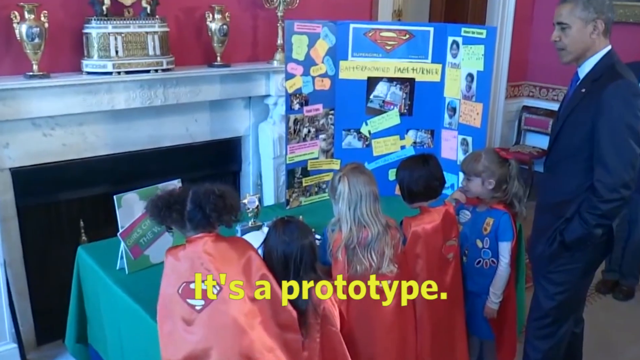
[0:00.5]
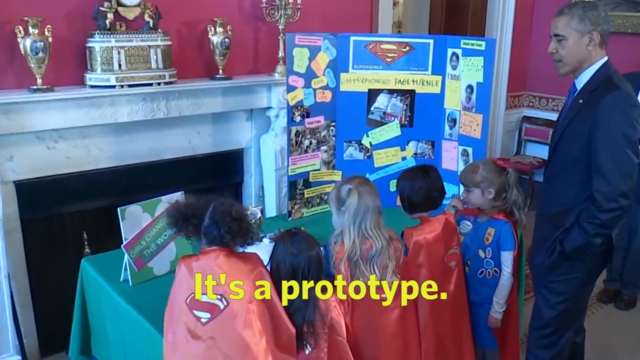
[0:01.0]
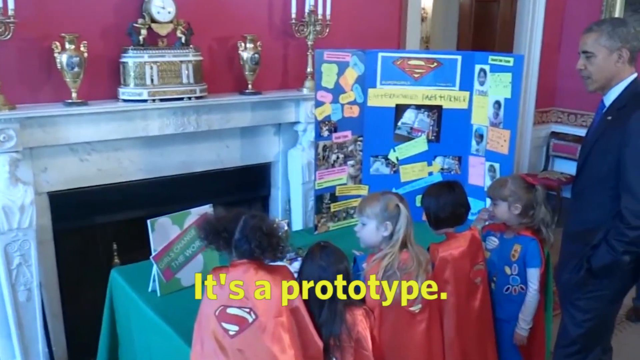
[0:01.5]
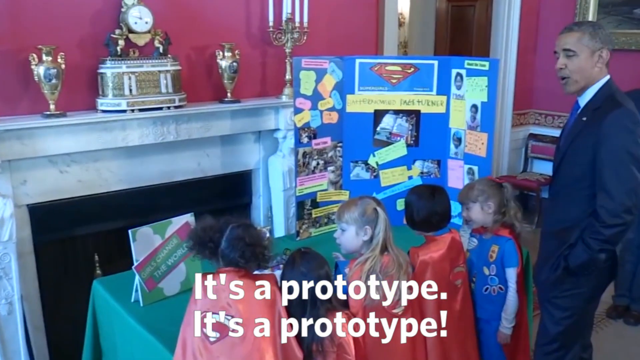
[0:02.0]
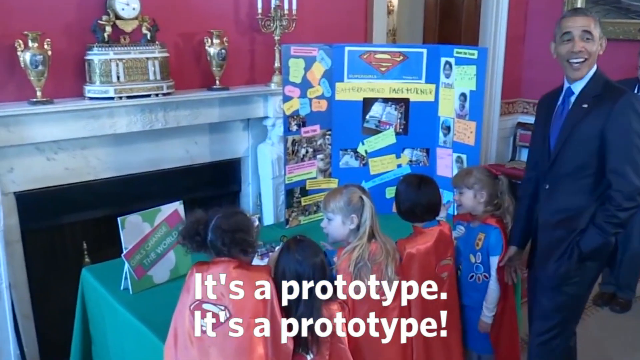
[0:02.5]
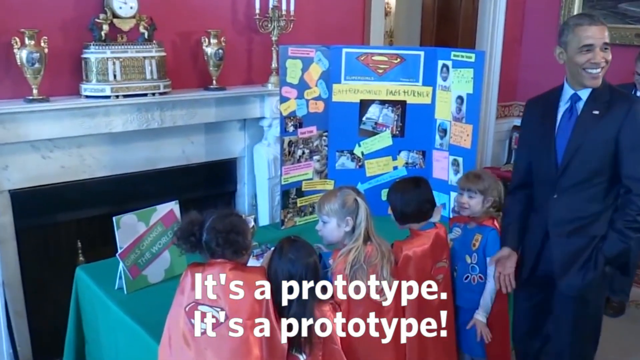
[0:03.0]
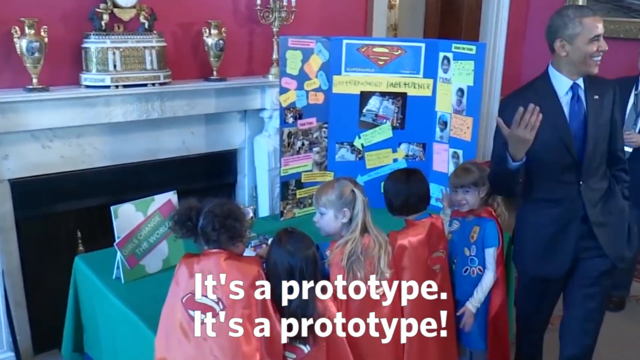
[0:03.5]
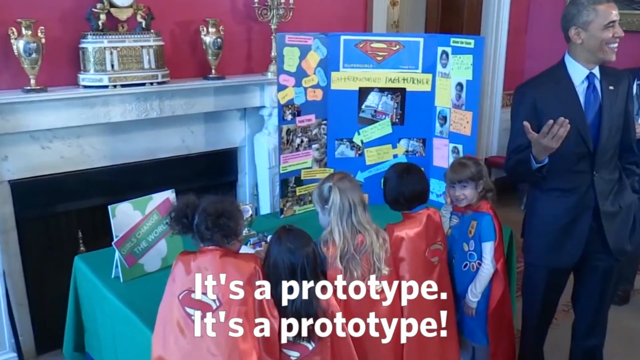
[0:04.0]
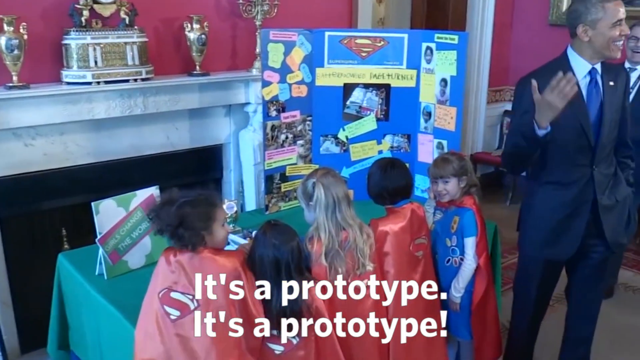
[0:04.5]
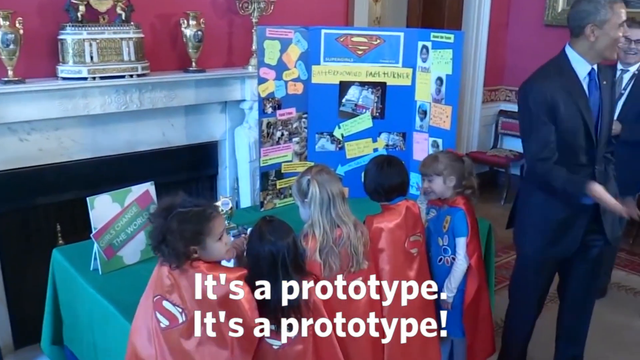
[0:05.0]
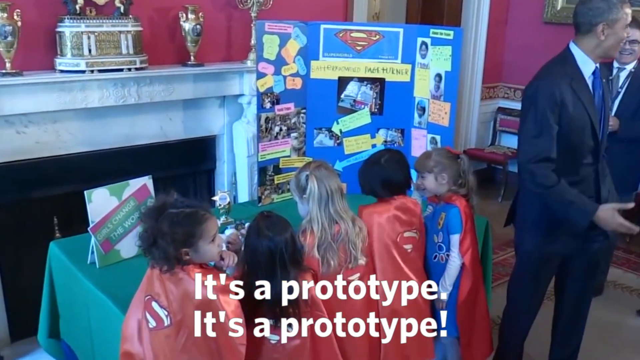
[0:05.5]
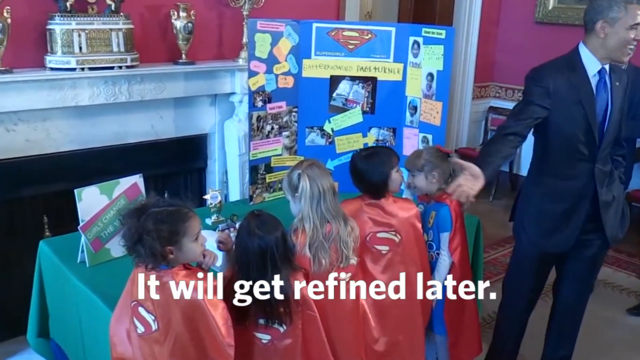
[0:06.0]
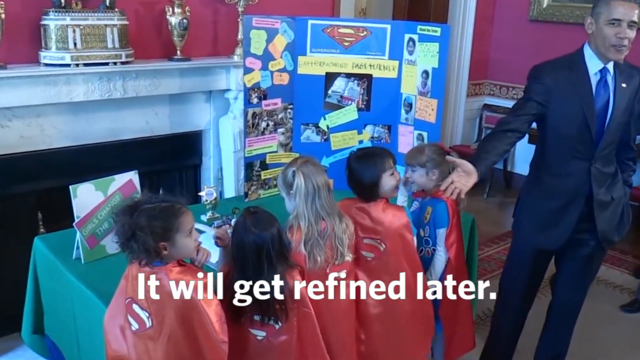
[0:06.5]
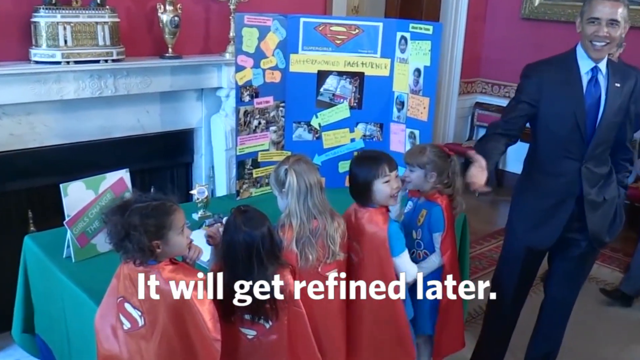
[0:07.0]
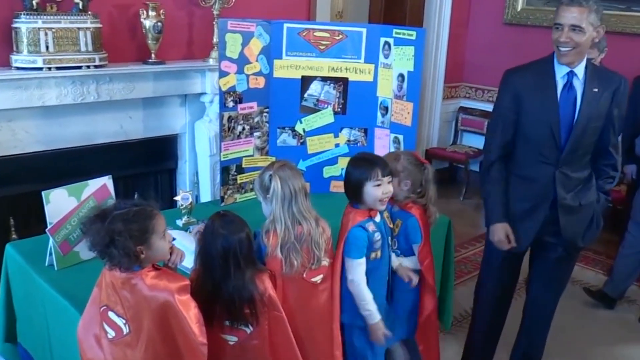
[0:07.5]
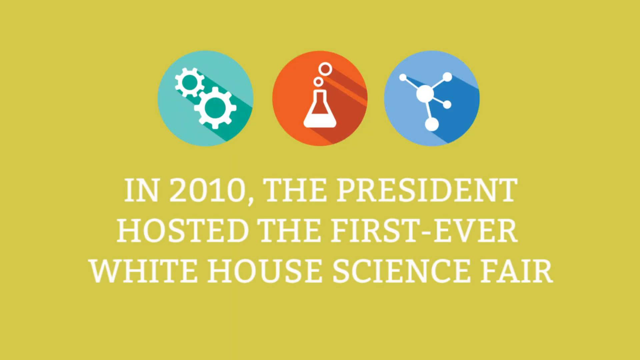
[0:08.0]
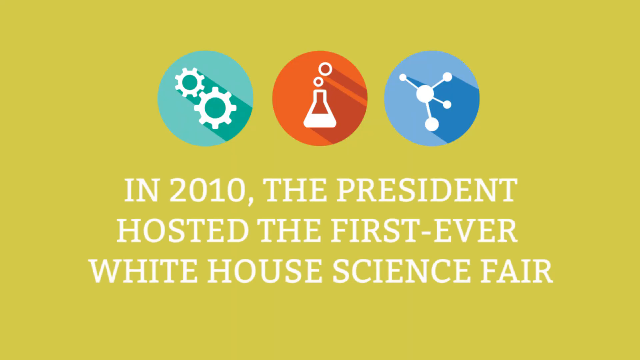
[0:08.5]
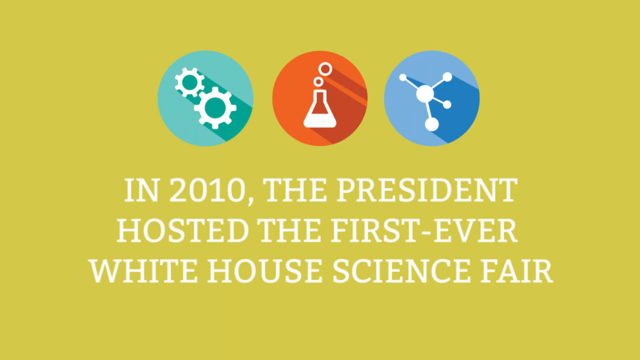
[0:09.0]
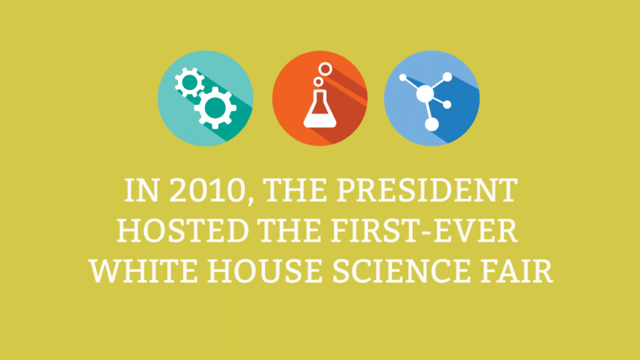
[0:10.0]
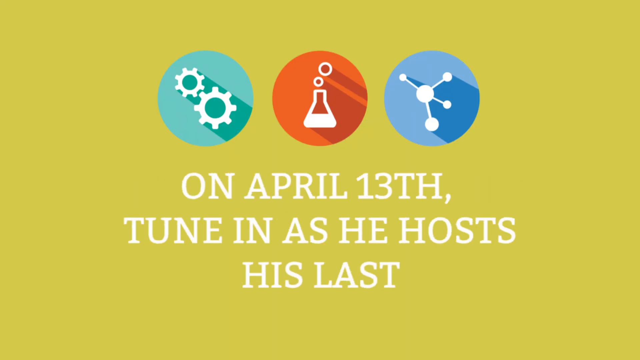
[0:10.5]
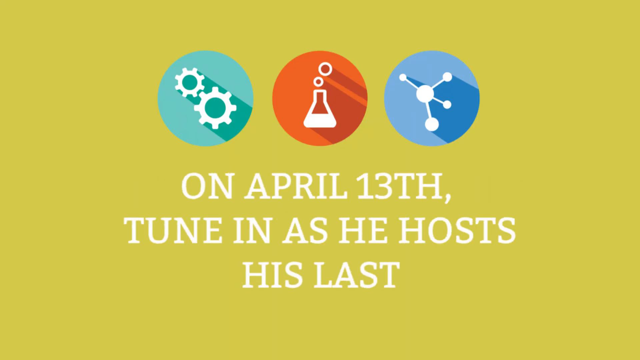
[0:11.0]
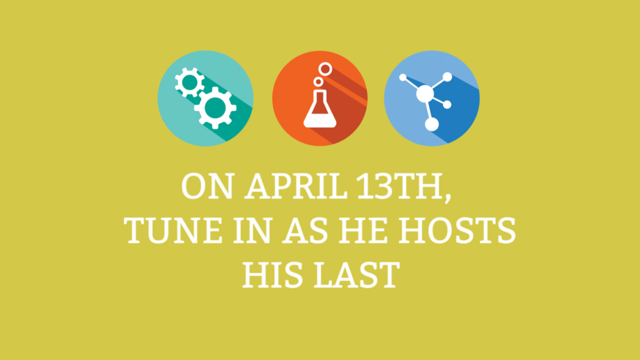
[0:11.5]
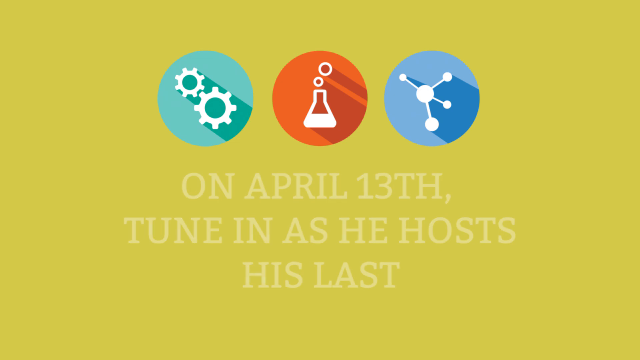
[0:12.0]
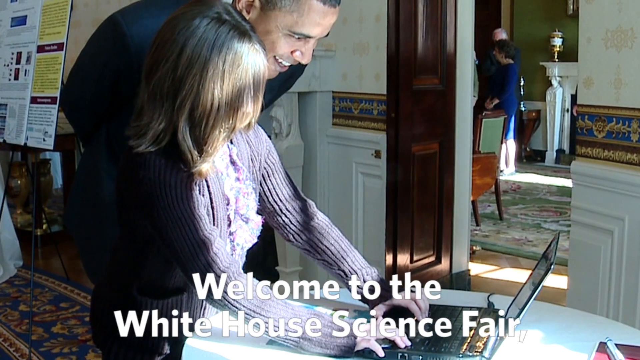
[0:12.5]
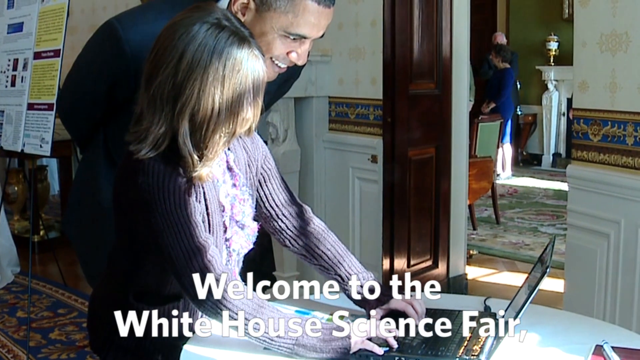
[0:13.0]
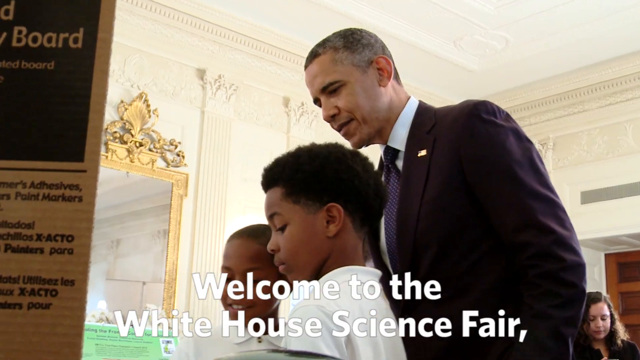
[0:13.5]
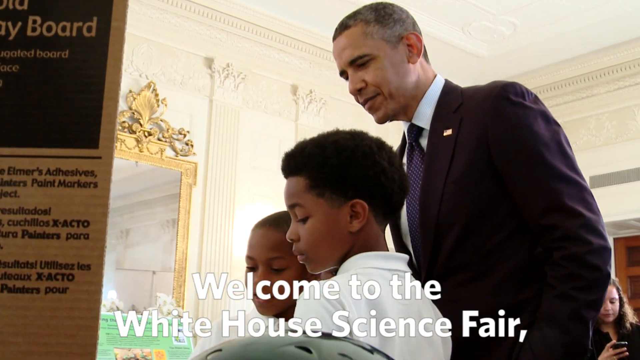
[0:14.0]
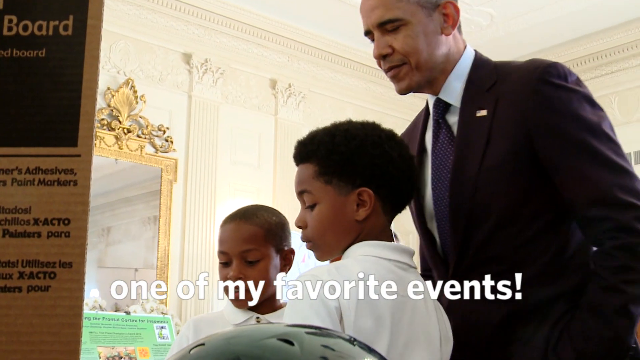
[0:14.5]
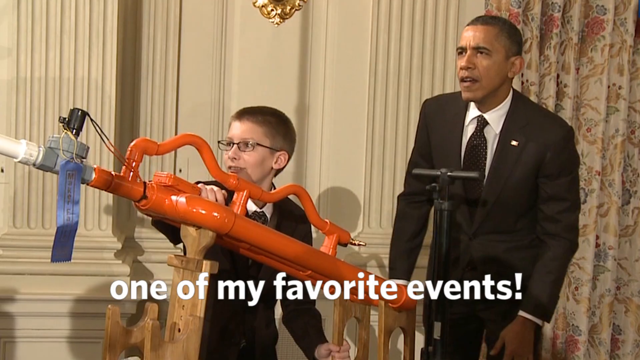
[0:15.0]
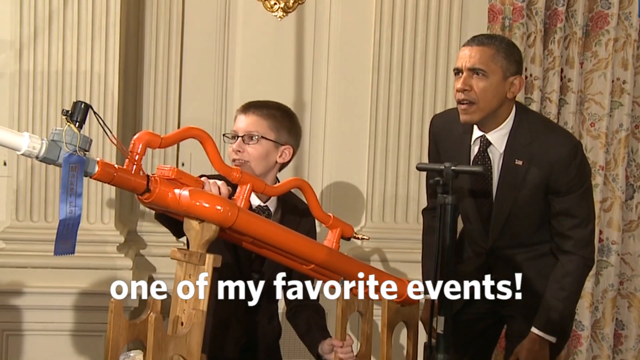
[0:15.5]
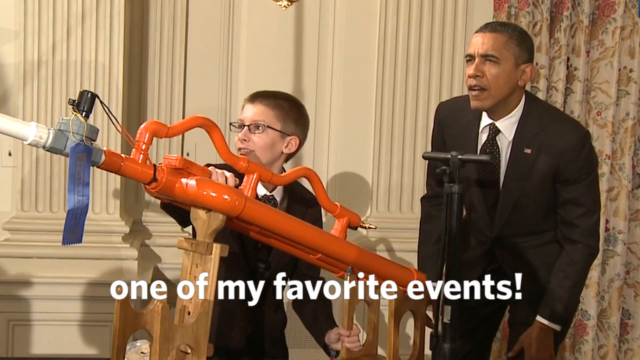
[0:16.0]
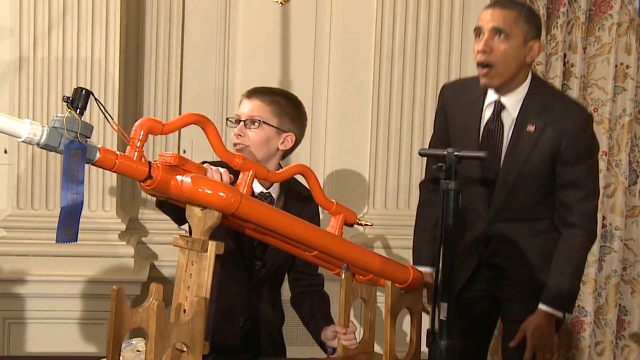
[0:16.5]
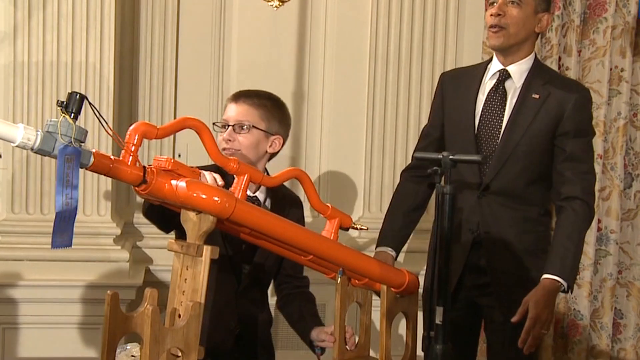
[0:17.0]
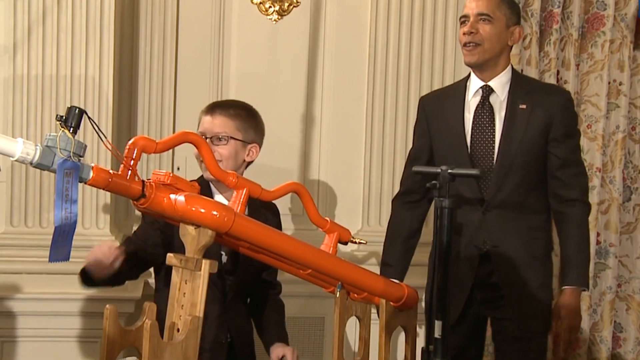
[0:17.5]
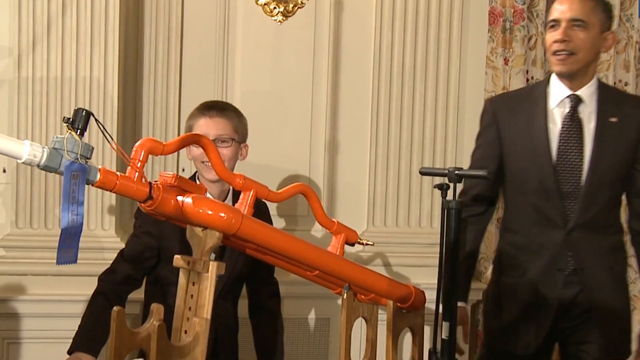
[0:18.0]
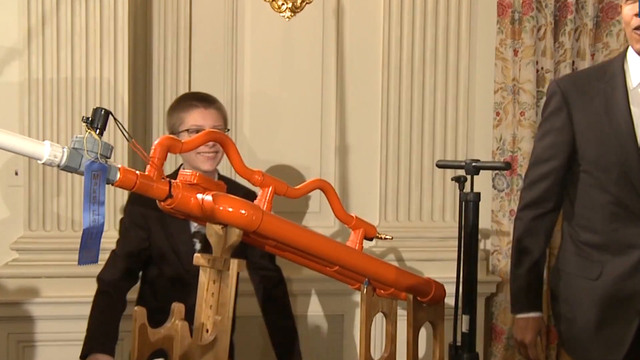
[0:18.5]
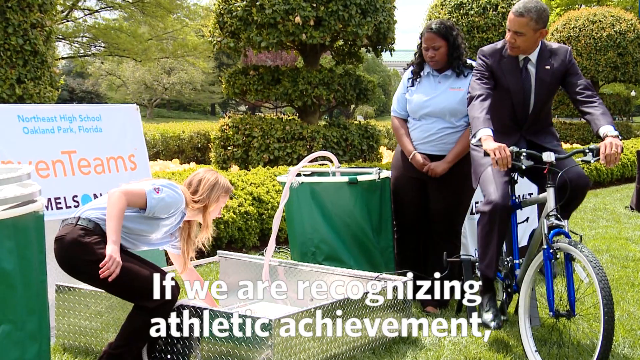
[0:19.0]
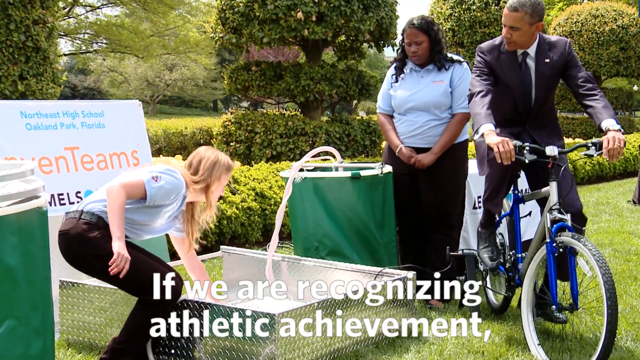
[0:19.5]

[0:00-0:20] President Barack Obama stands with a group of kids wearing red capes. In some of the pictures he rides a bike in place, and he helps some students who have Superman capes on. He welcomes students into the White House, and he says it is one of his favorite events. He stands with various young students, and then the video cuts to older children at a science fair he is hosting at the White House. He is very interactive with the students: some are teenagers, while others look like they are probably in kindergarten or first grade. The young ones seem kind of mesmerized by the science fair projects, and Obama is very animated as he interacts with the older students as well.